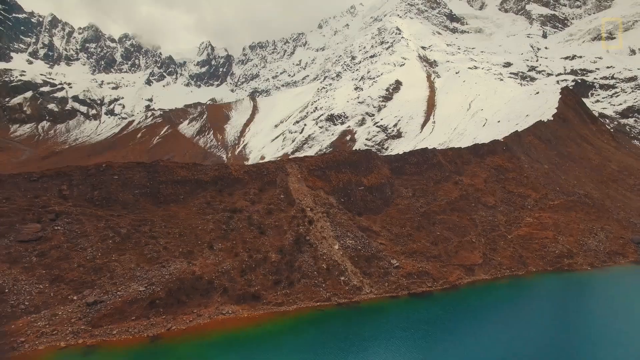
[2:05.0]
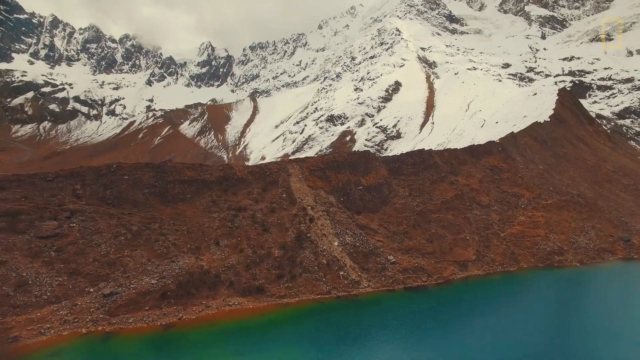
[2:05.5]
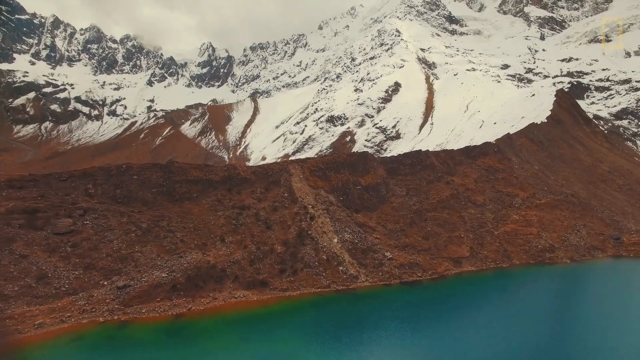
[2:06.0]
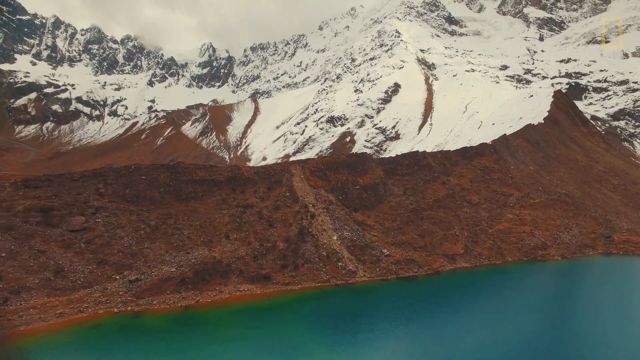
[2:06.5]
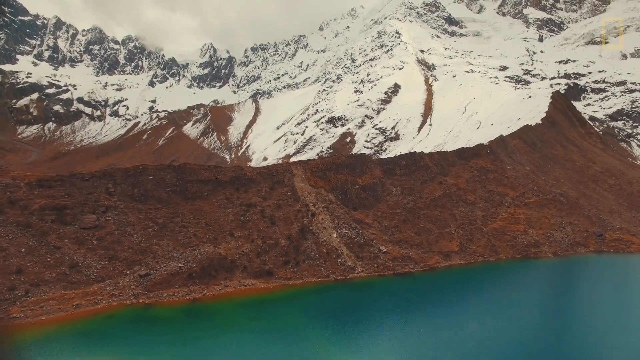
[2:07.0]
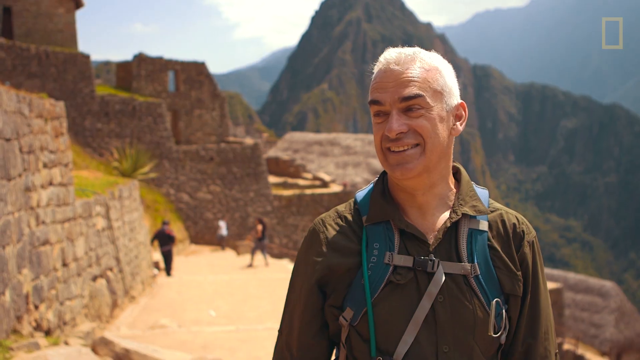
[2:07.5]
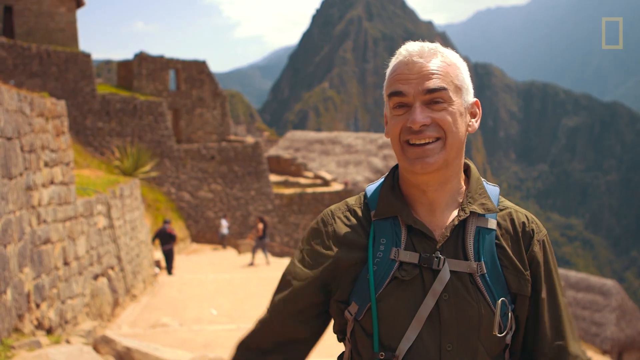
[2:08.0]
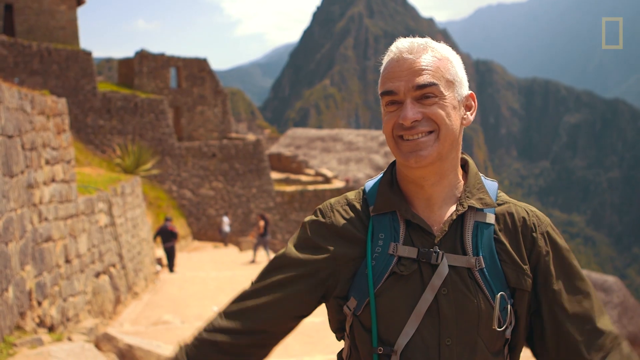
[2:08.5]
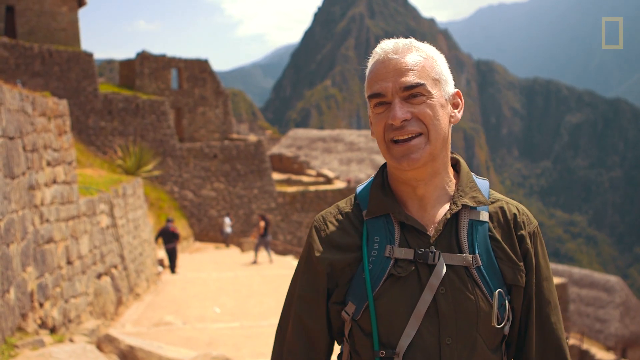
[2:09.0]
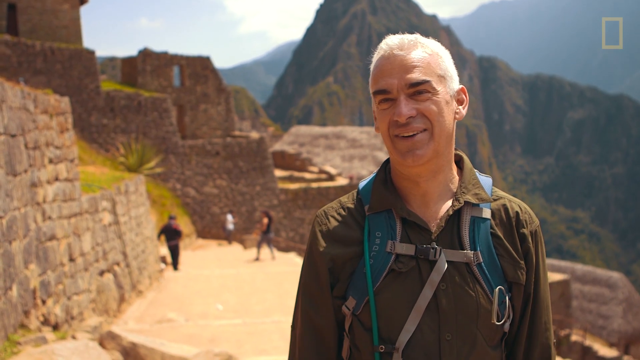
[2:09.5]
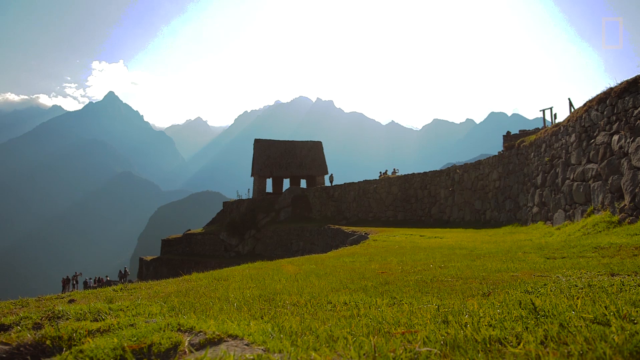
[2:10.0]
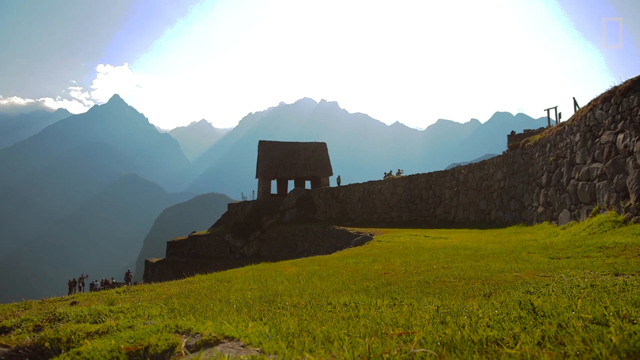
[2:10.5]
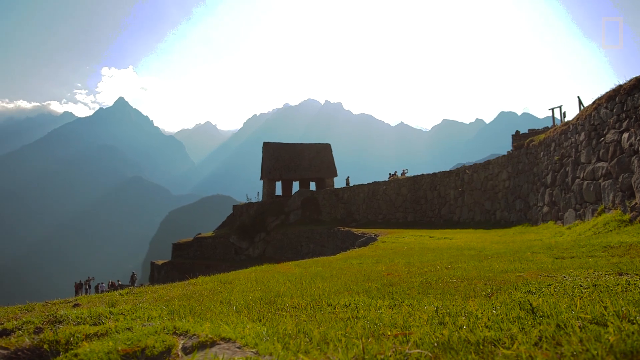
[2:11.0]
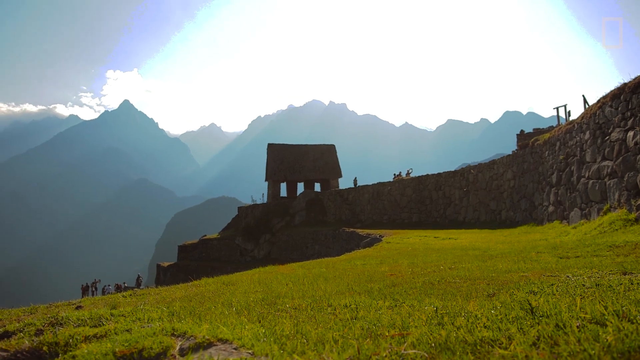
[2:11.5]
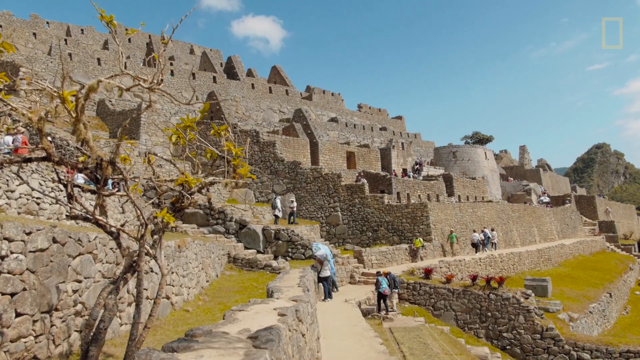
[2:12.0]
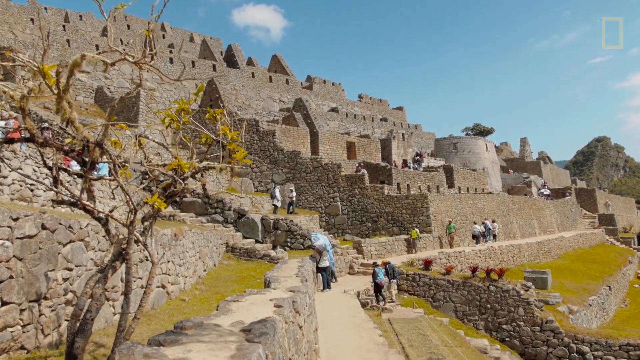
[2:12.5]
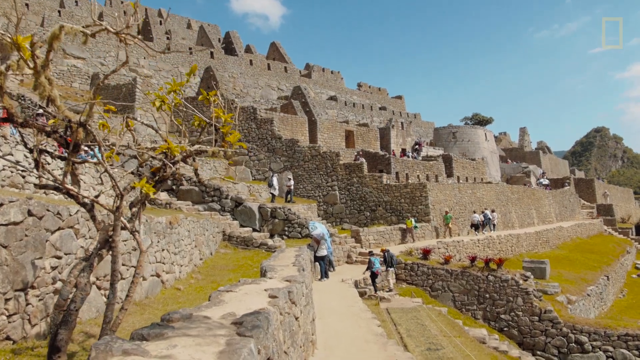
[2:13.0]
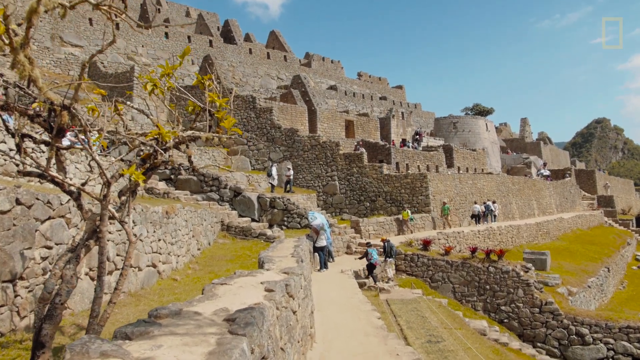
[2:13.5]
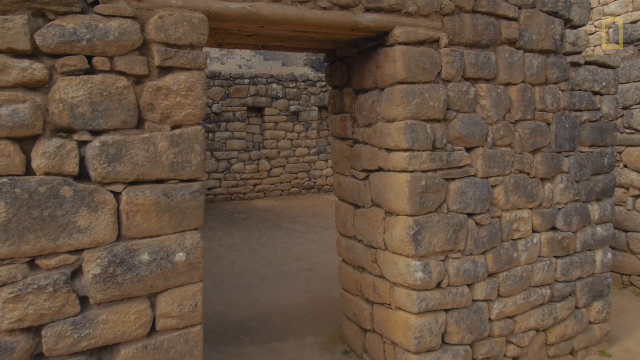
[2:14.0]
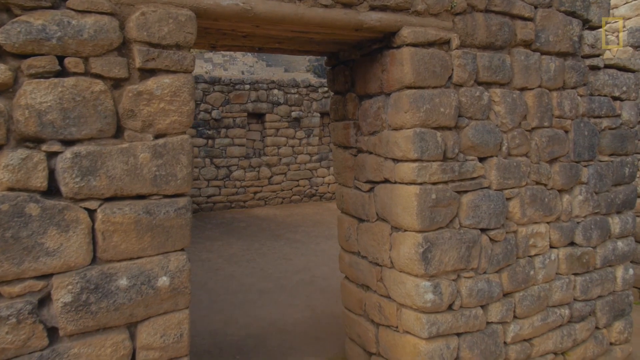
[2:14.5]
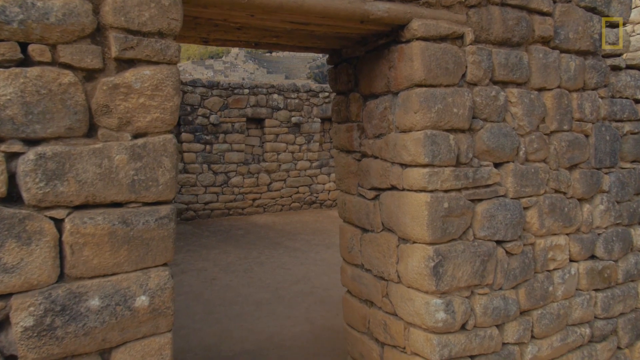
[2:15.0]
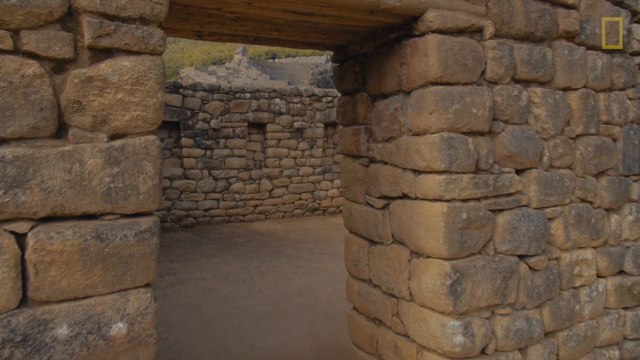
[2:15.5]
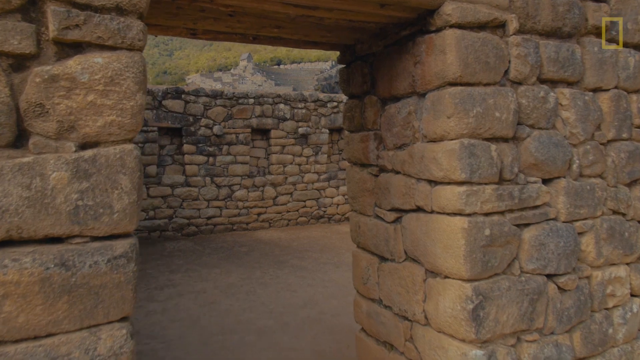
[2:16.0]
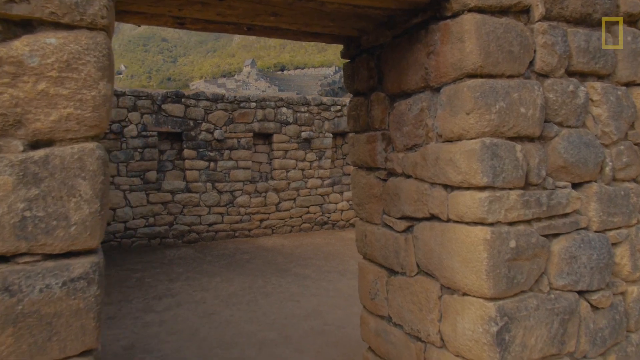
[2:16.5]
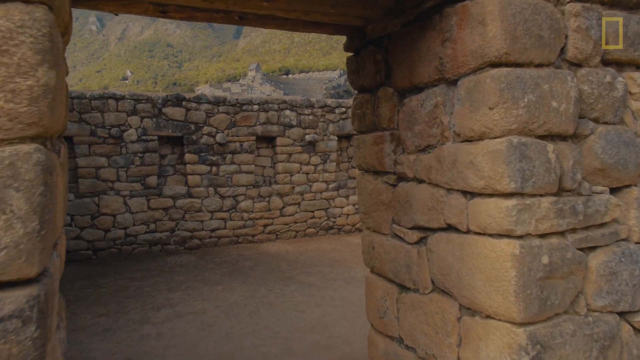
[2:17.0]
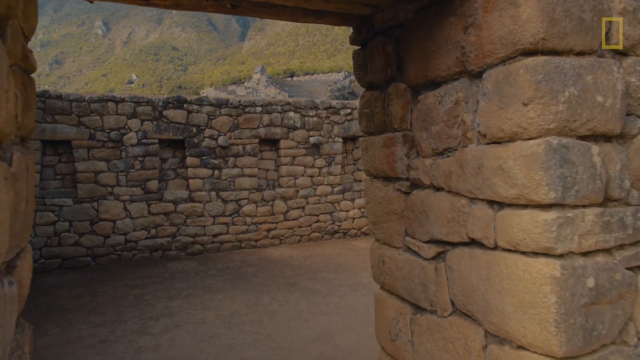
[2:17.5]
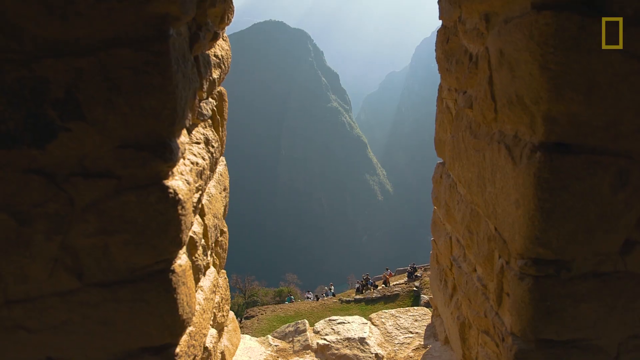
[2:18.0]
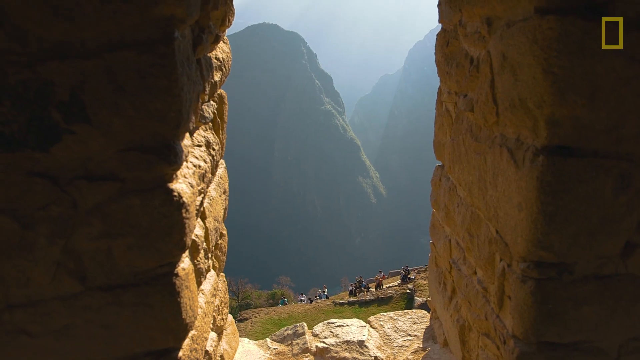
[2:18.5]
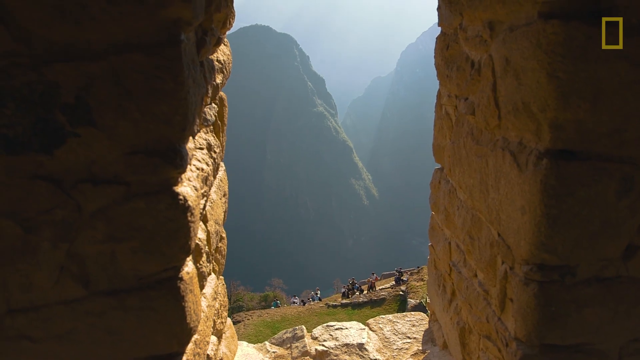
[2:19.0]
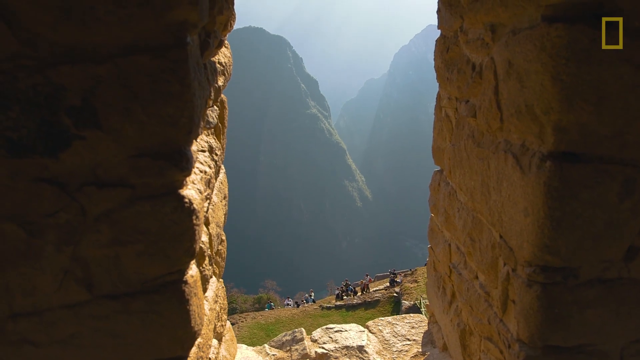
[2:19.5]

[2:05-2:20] A long view looks down through the valley and the surrounding scenery. A white-haired man who has arrived at the top stands on one of the walkways, elated, without his hat and with his backpack on. Stone stacked on stone forms walls and terraces, and there are archways. At one point the view is from a lower path looking up at graduated walls rising, with little towers and ramparts. The stone monoliths are still visible, along with grass in places and little huts on the plateau. The sky is sunny, and walls and buildings are thrown into shade. From up here the view extends miles down through the valleys.